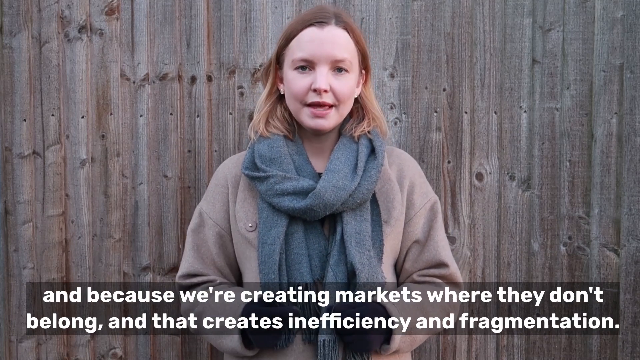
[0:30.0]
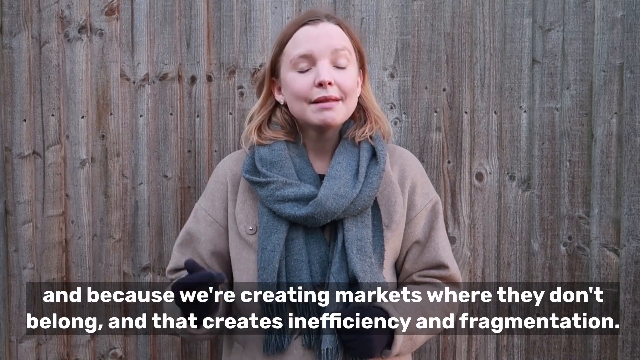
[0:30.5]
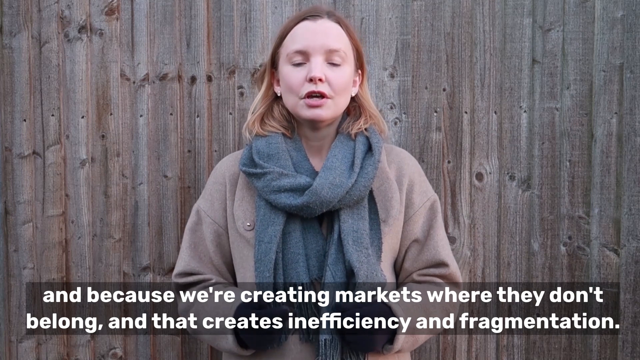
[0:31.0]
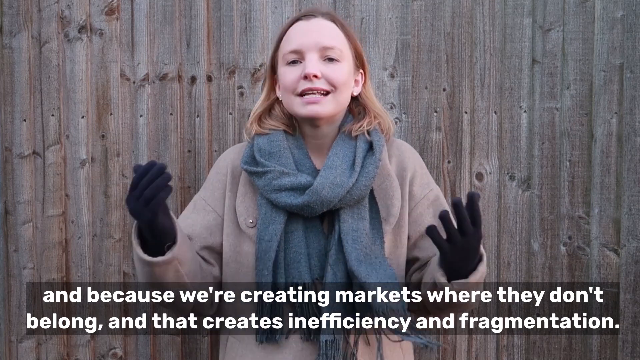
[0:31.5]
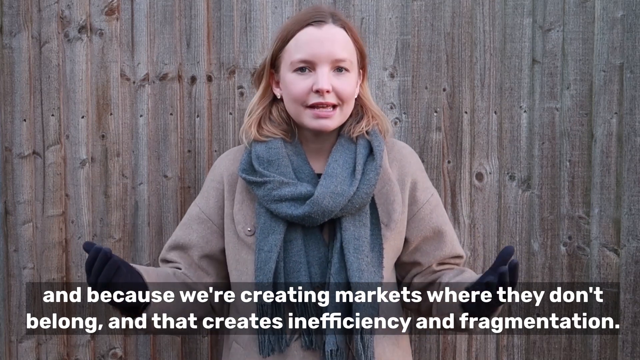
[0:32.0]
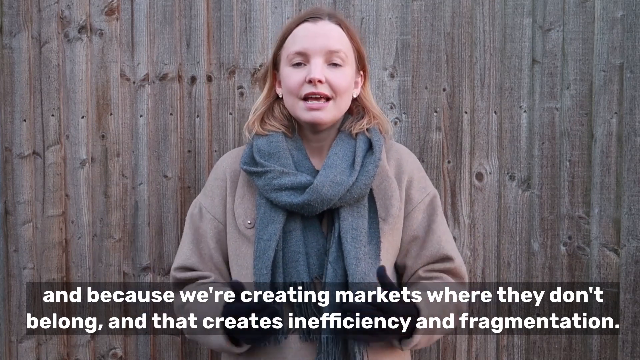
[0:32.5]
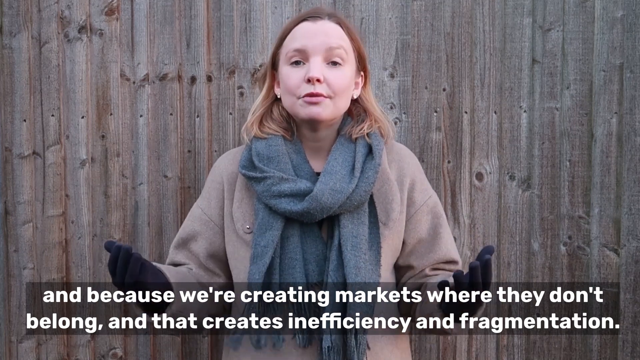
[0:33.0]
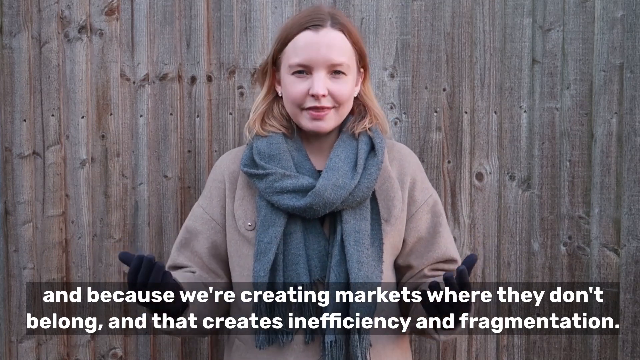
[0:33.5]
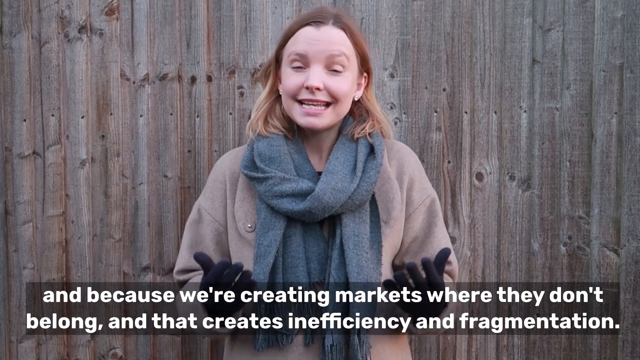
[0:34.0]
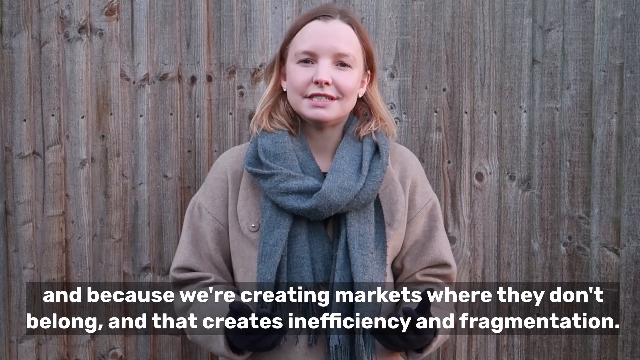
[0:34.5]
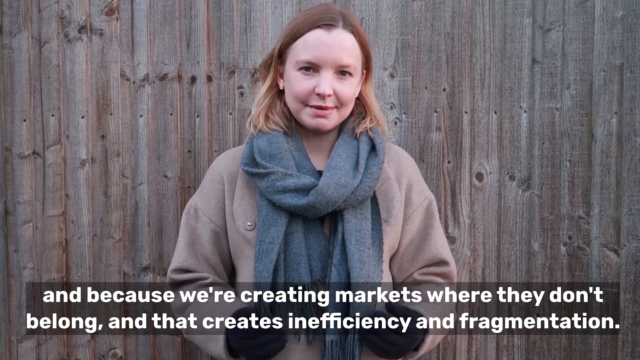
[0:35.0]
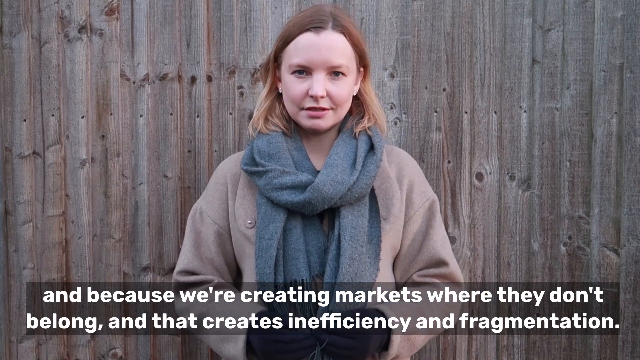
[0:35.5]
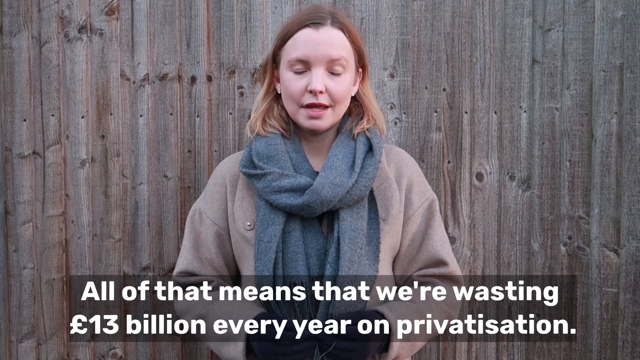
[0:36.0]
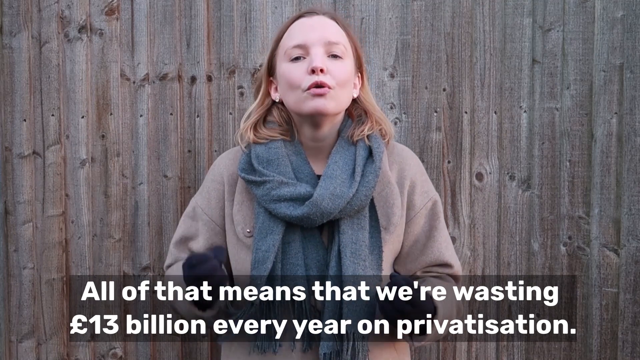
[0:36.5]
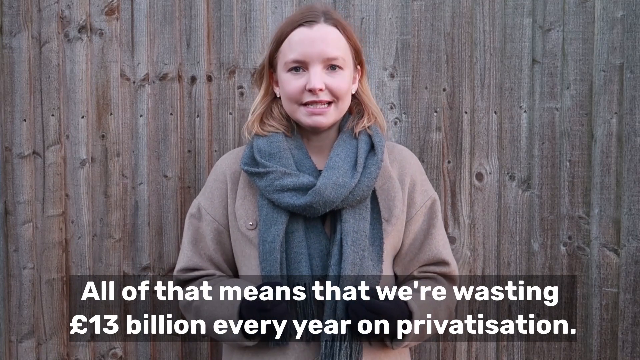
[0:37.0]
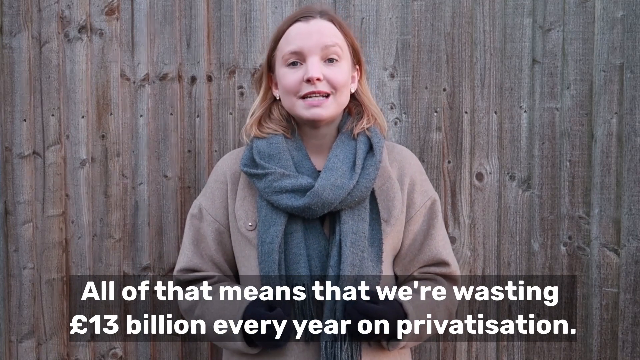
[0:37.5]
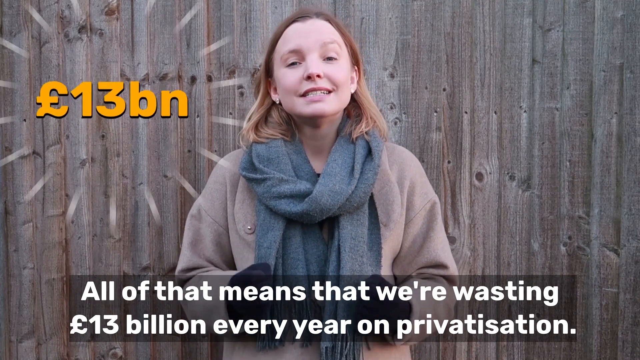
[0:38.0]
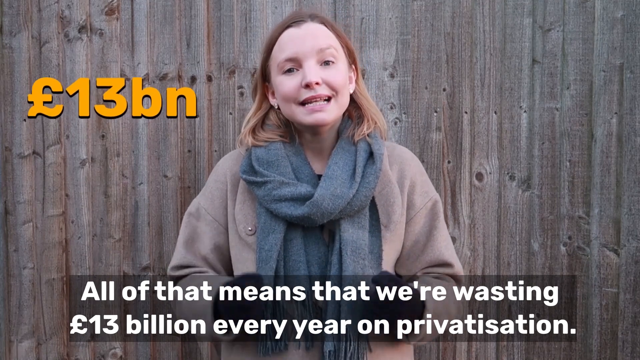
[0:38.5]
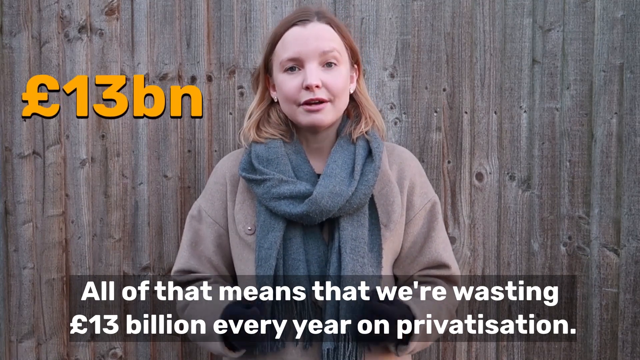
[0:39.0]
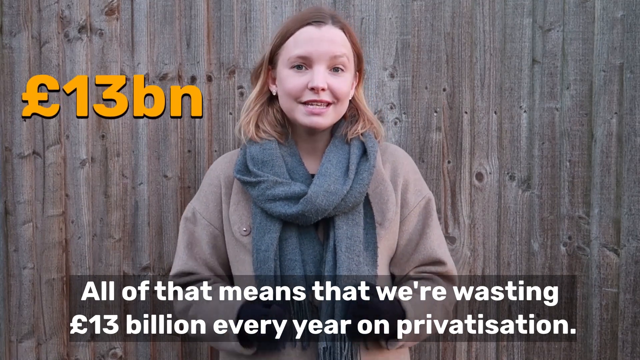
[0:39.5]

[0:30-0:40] The same white woman with blonde hair is still wearing her coat and scarf outside against the fence. She speaks directly to the camera and seems passionate, her demeanor and manner of speaking unchanged.